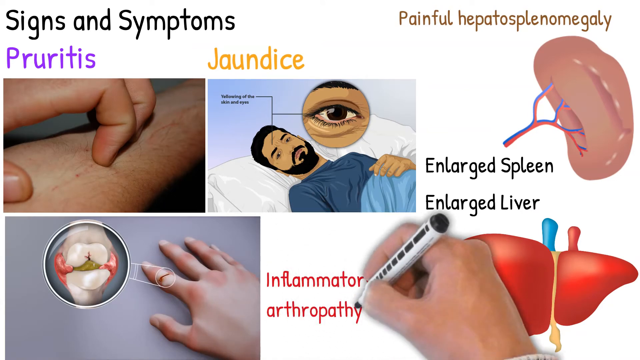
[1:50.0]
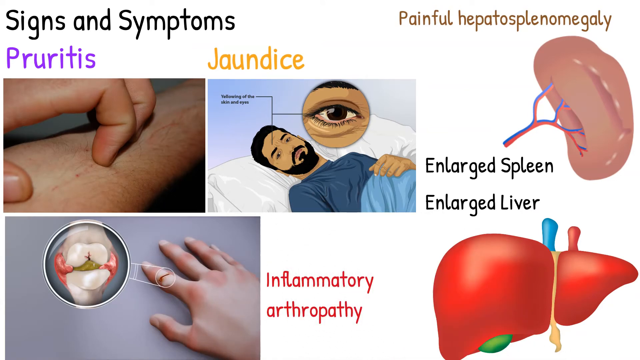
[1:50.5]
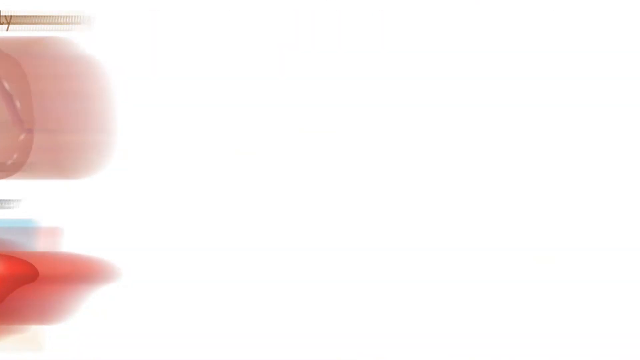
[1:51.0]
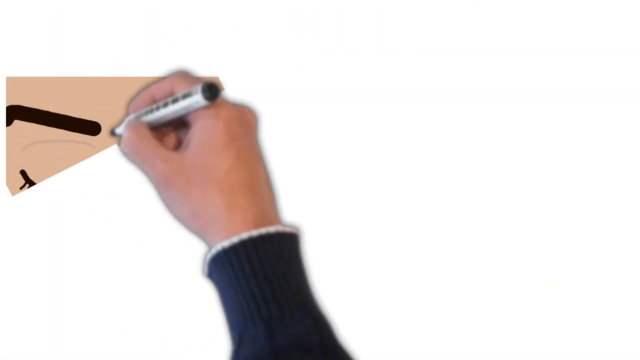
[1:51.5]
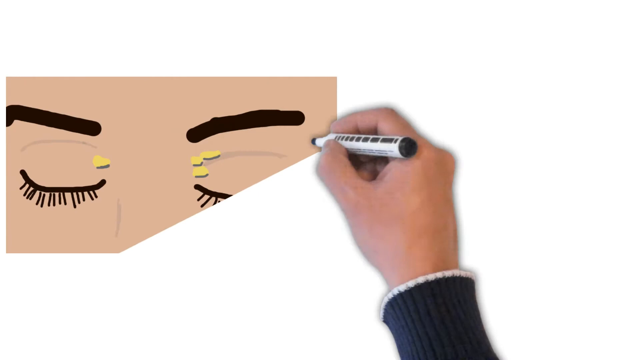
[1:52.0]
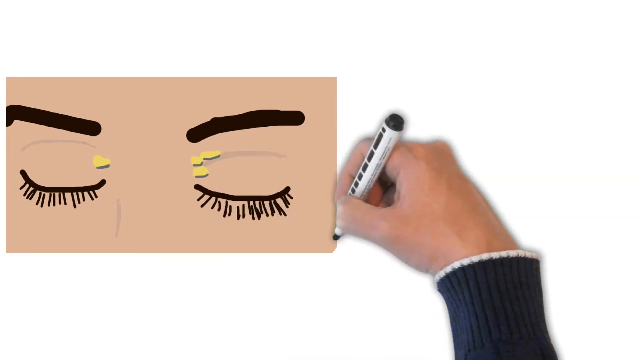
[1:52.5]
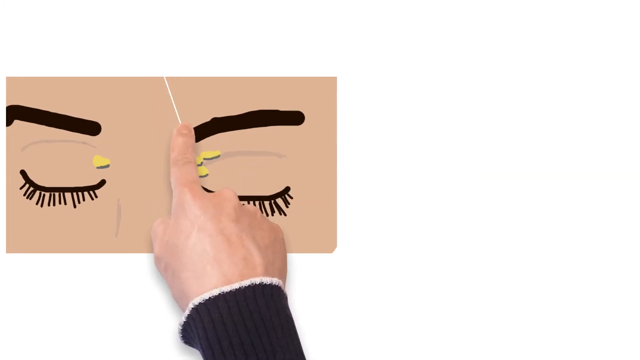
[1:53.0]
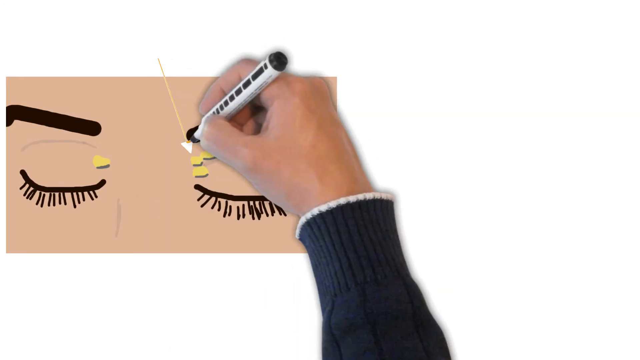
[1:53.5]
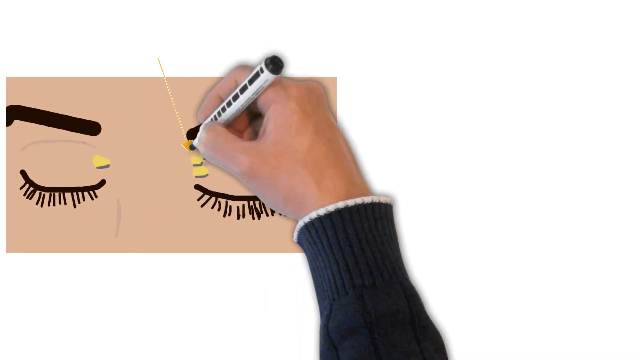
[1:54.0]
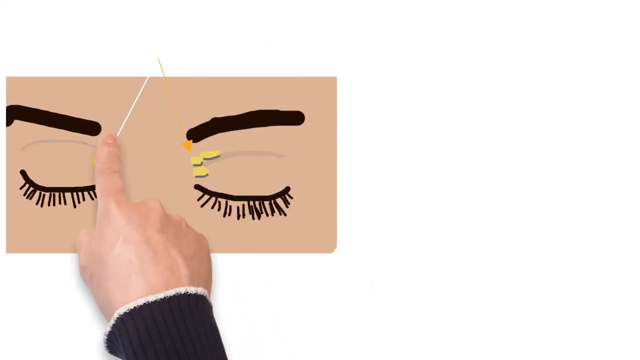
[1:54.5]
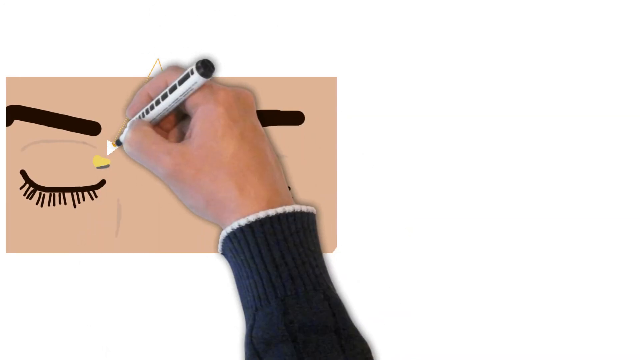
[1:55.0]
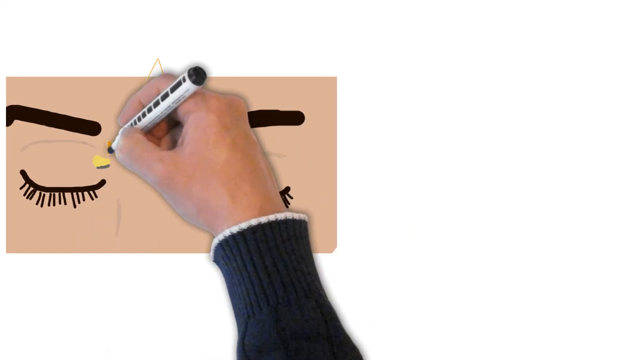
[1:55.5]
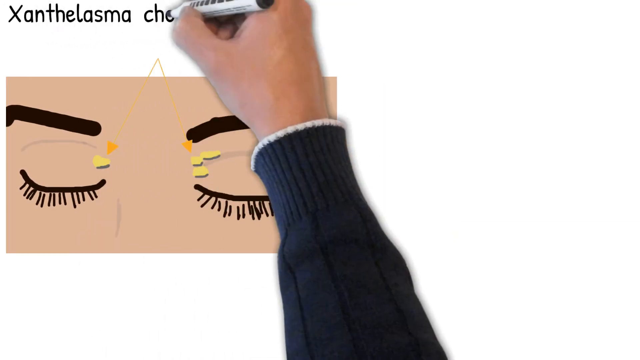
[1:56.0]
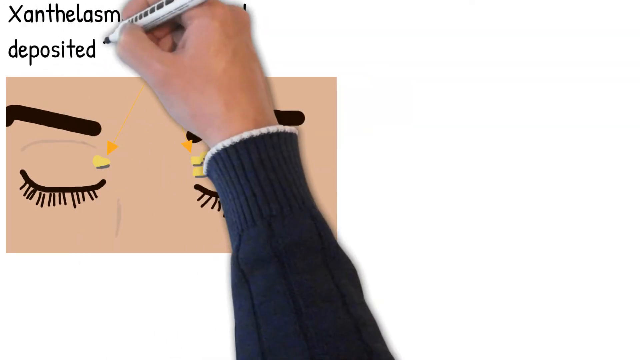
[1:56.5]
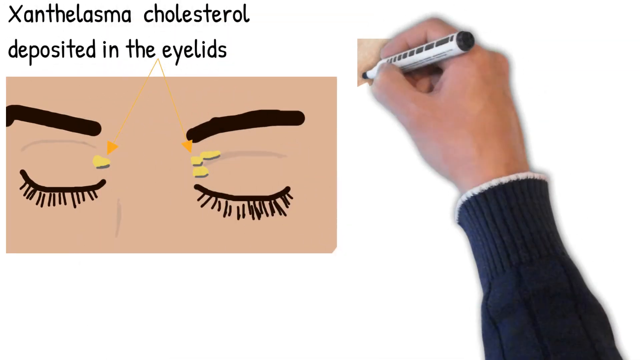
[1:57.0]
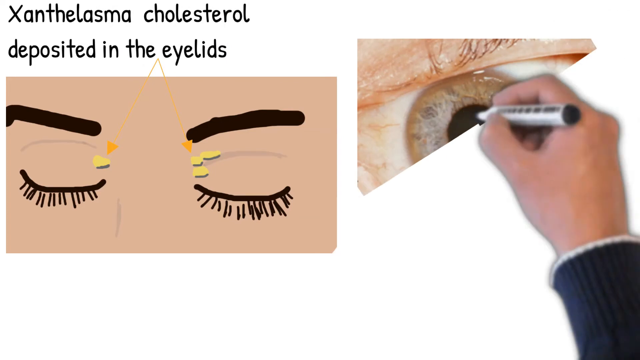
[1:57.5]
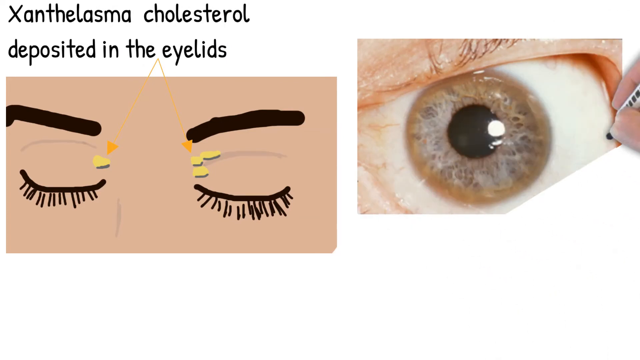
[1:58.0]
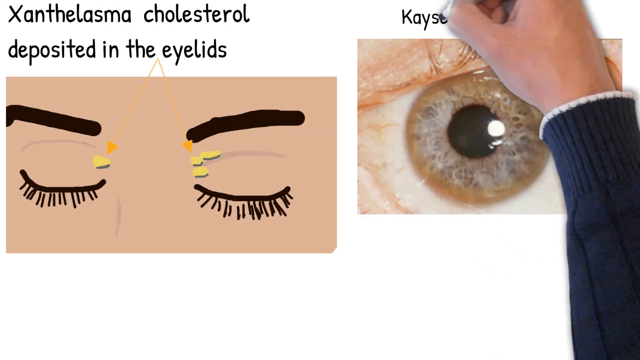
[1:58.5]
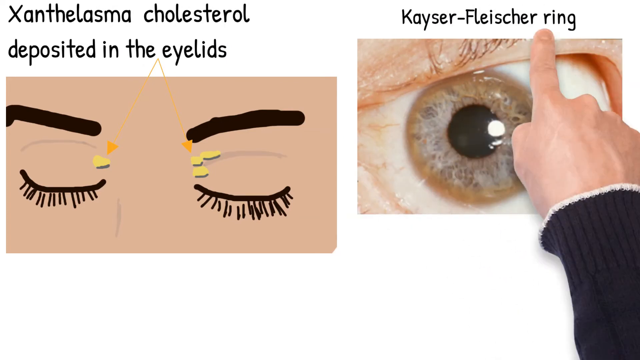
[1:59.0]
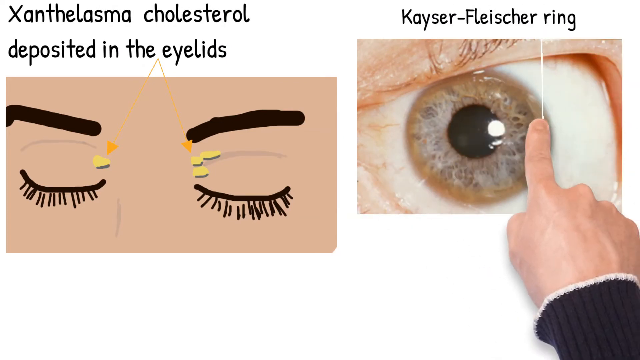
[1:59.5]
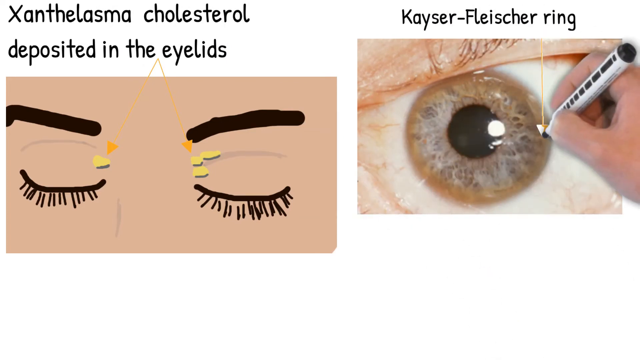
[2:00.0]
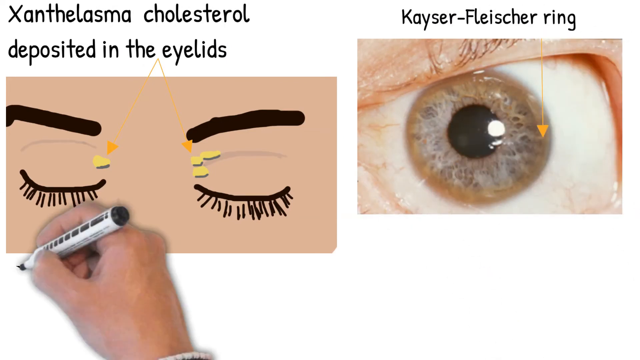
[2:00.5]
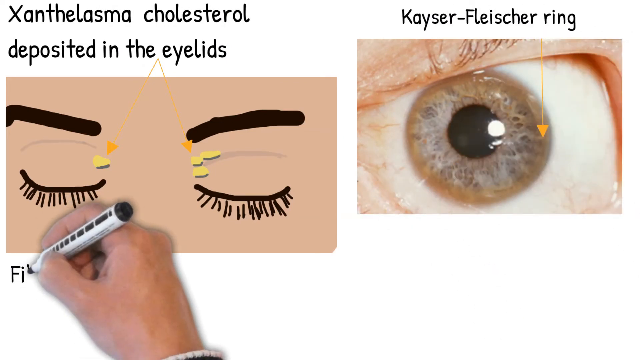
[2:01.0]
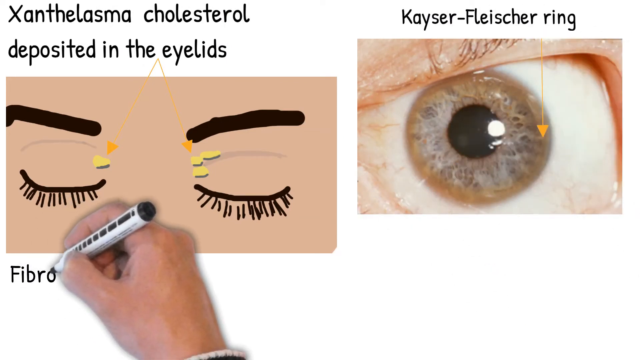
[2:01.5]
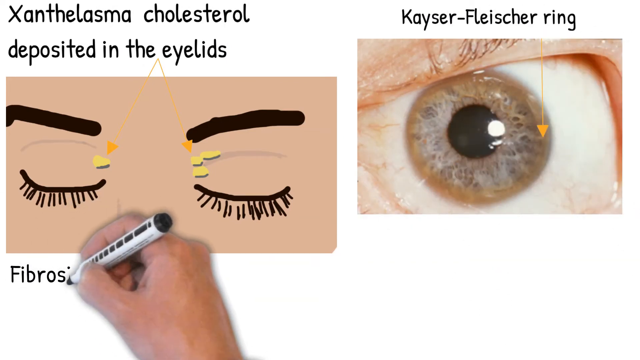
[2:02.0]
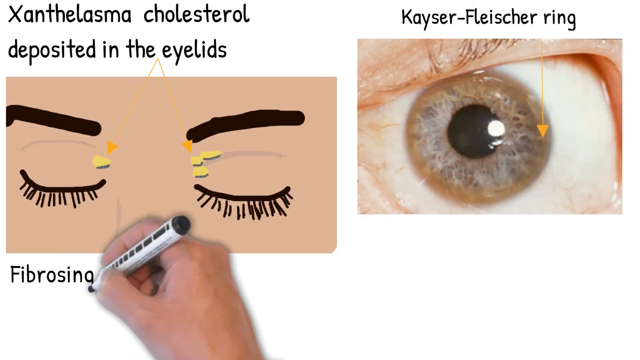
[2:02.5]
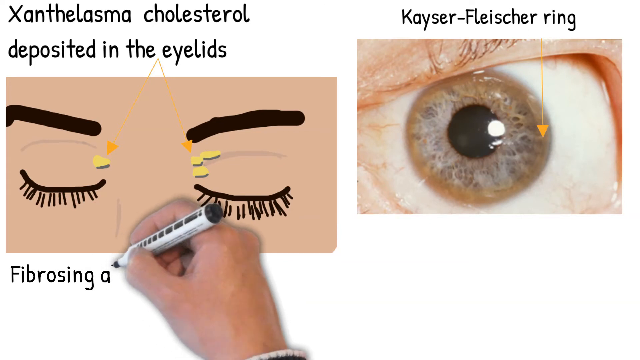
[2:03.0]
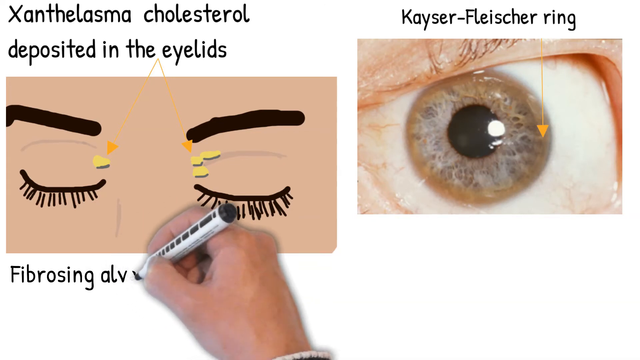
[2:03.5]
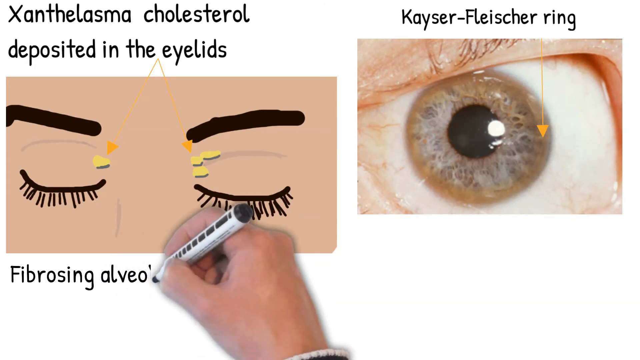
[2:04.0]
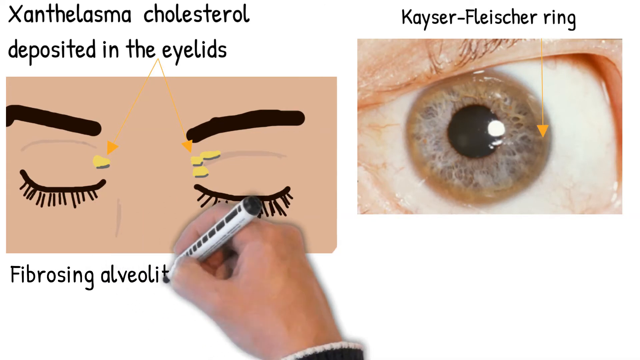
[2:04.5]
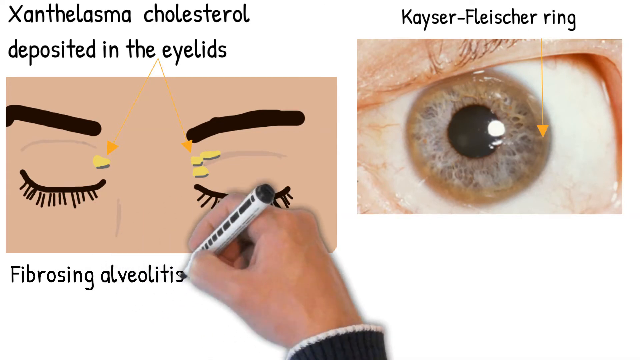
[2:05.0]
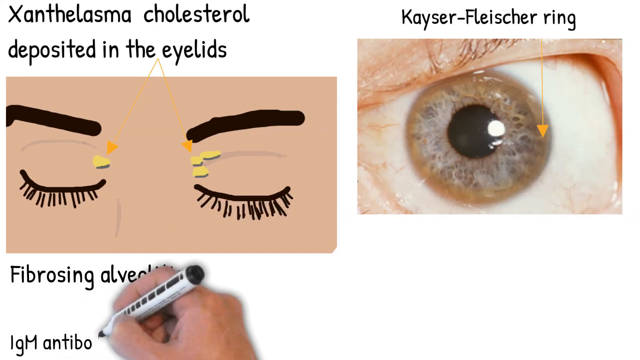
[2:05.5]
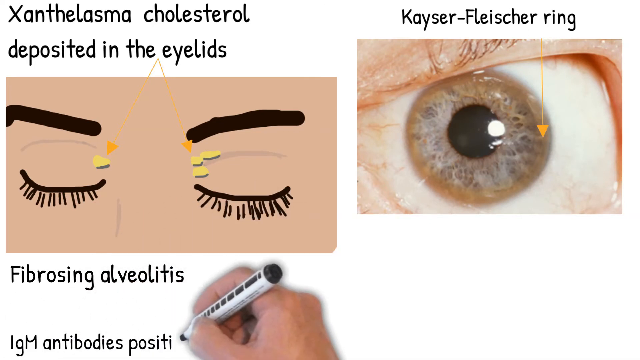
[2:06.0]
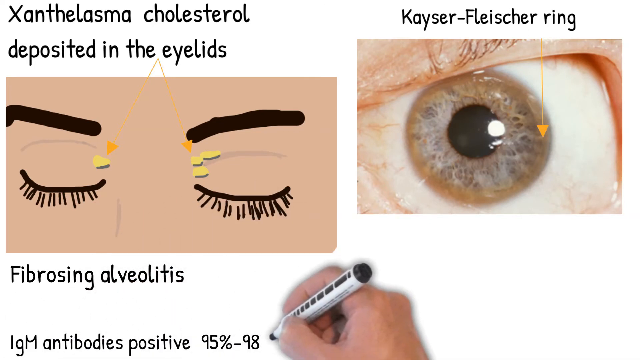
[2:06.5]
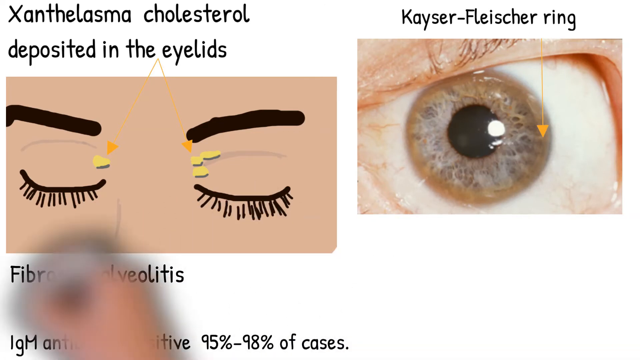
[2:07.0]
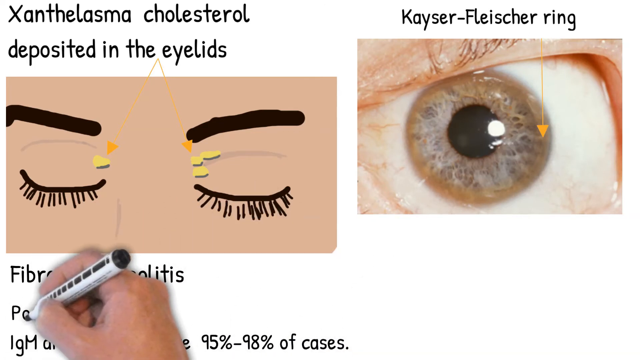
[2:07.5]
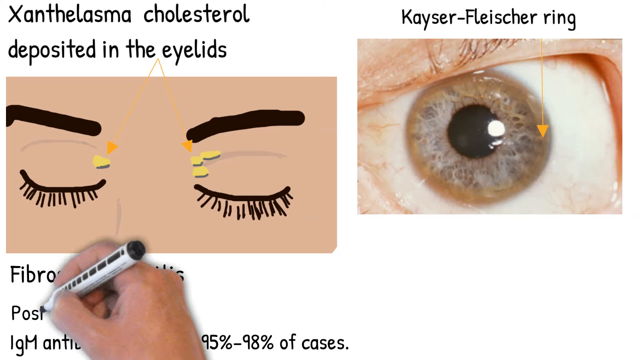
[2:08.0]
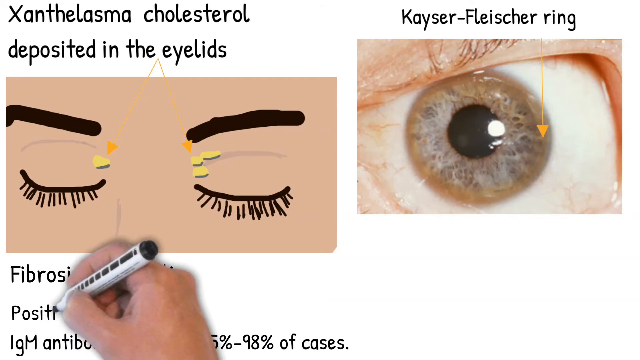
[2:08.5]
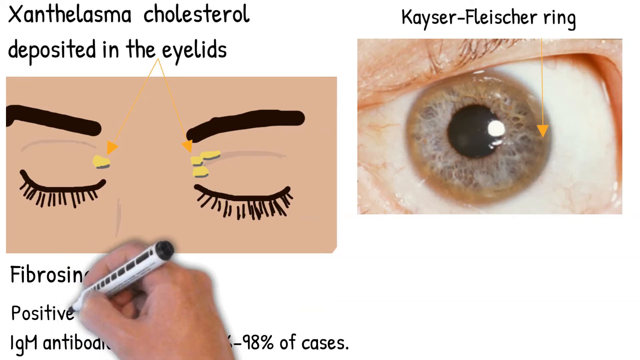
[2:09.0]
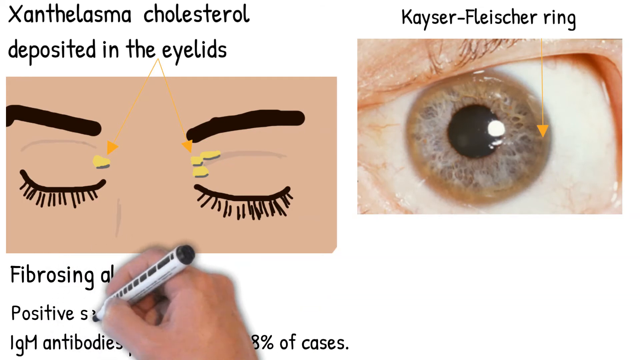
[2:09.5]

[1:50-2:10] In the very center is an image of a jaundiced man. Beneath it, on the lower left, the inflamed hand with rheumatoid arthritis appears again, labeled "inflammatory arthropathy". On the left side, the hand draws a Caucasian face with brown eyebrows and brown eyelashes and yellow deposits on the skin around the eyes, with arrows pointing down to the deposits and text reading "xanthelasma cholesterol deposited on the eyelids". To the right is a hazel eye looking directly at the viewer, with black text above it, "kaiser fleischer ring", pointing down to the area around the iris. Beneath the image on the left, text reads "fibrosing alveolitis".